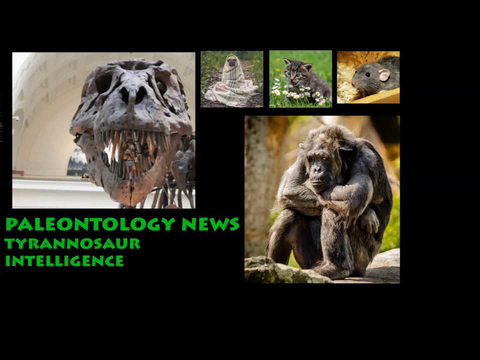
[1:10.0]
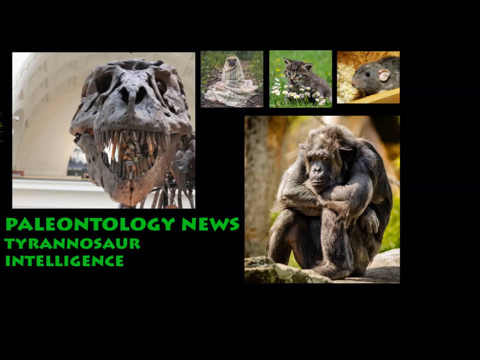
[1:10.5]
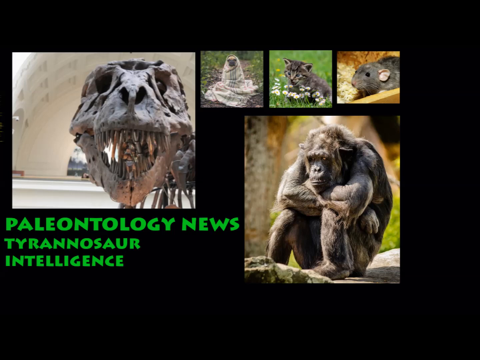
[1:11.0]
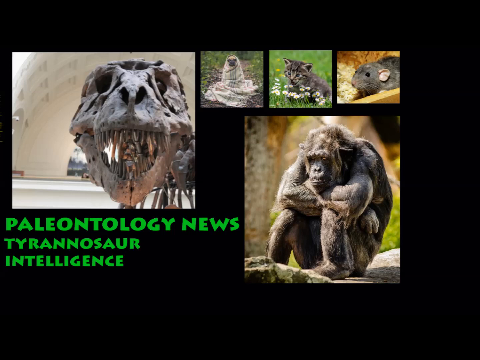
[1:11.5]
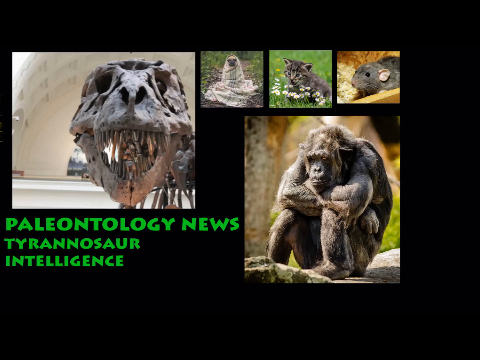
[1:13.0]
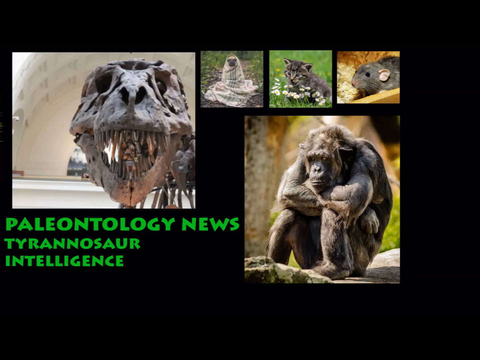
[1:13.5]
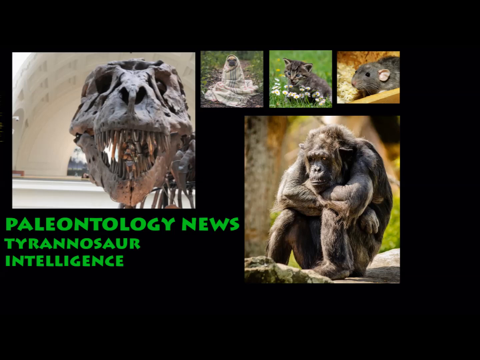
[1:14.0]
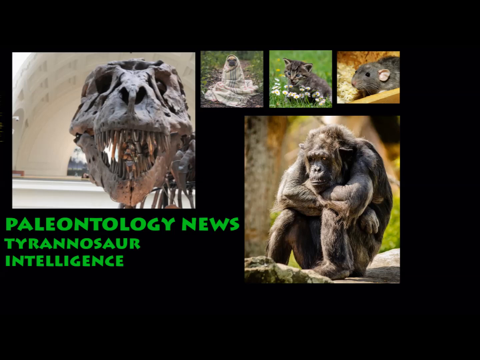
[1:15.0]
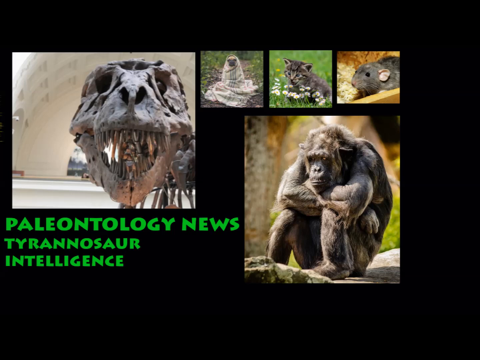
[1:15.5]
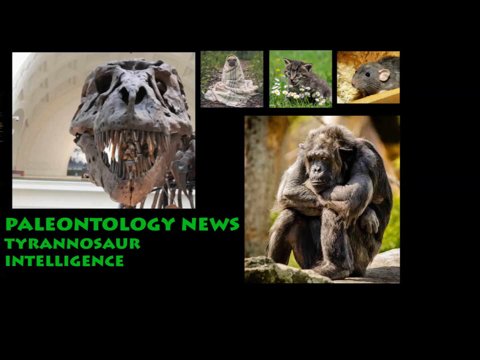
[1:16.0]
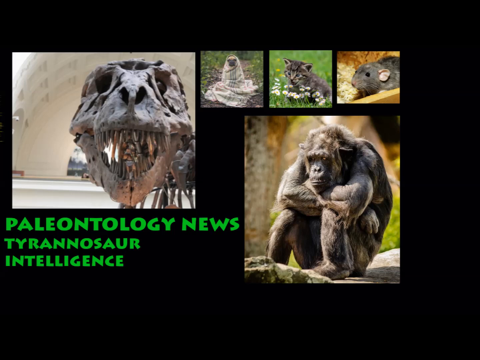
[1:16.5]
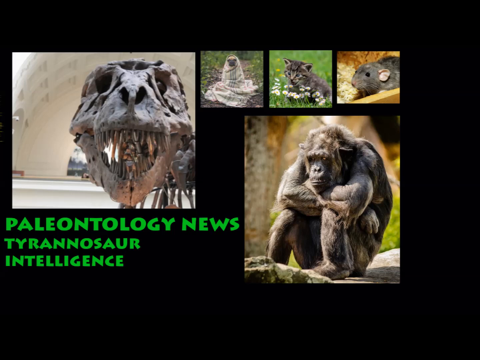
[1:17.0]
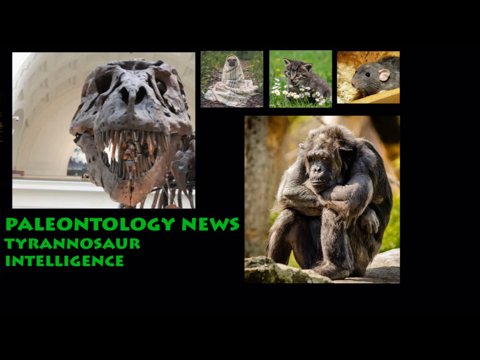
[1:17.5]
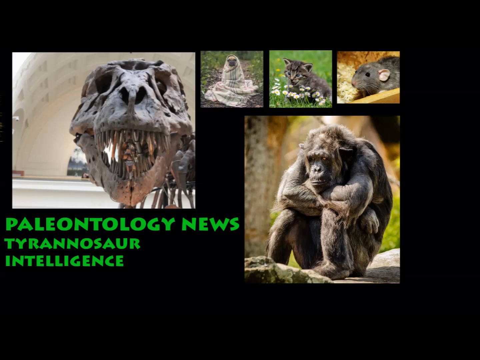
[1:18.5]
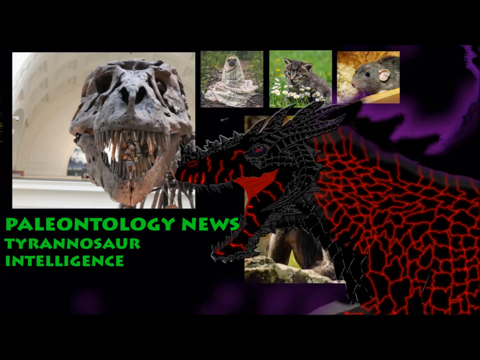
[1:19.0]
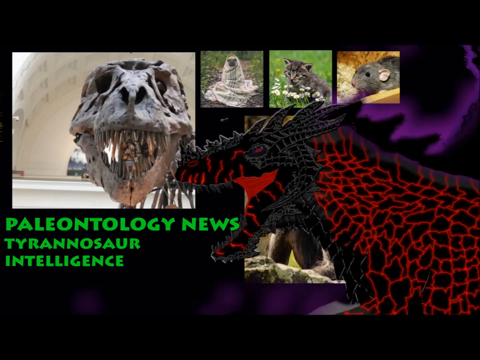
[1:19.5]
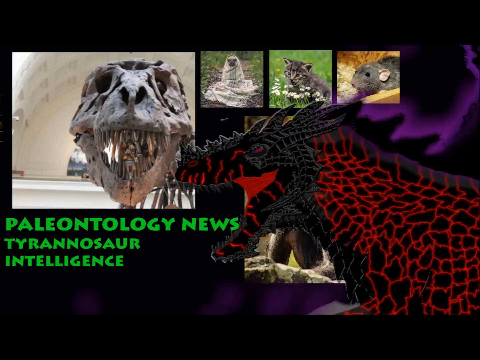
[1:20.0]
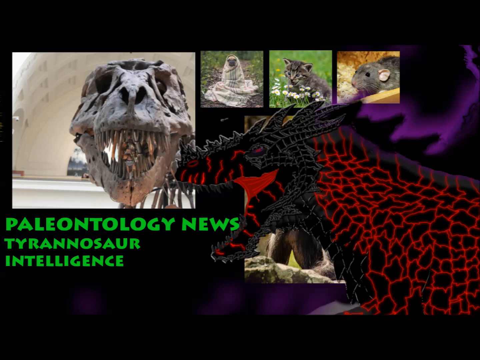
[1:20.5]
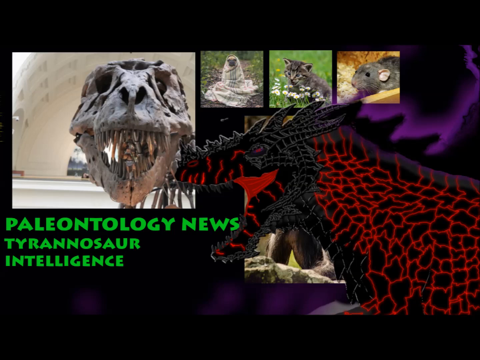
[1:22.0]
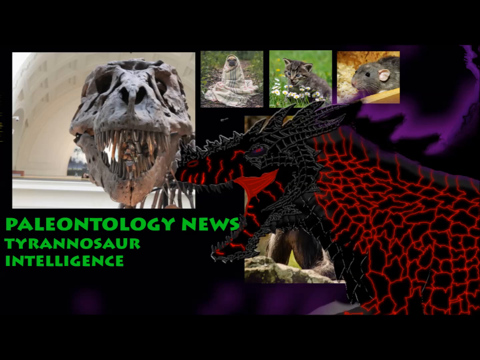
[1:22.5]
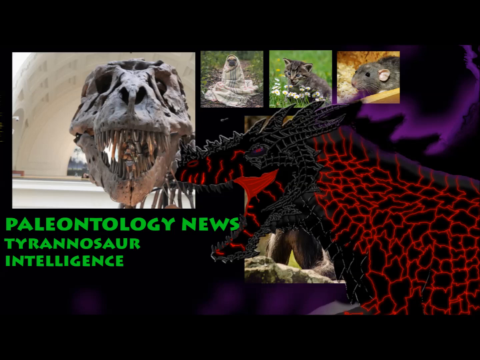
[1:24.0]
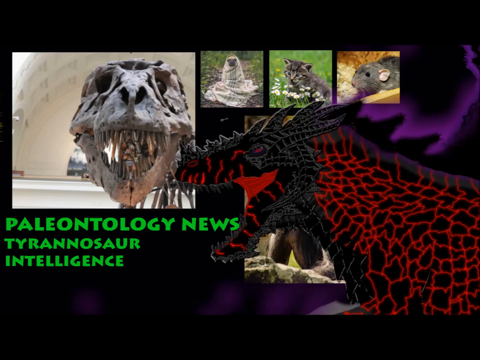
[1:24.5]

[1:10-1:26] The picture of the skeletal head of a tyrannosaur is in the left corner. To the right are three thumbnail clips: an unidentified animal sitting on ground blanketed in white, a kitten in a field of white flowers, and a gray mouse. These thumbnails are now in the top right corner, and beneath them a larger color picture of a gorilla is presented. Beneath the dinosaur skeleton is text that says "Paleontology News, Tyrannosaur Intelligence." Then a red and black spotted dinosaur with horns and its mouth open, showing the red interior of its mouth, springs from the bottom right corner of the screen. Beneath the dinosaur's head is a picture so blurred that its content cannot be made out.